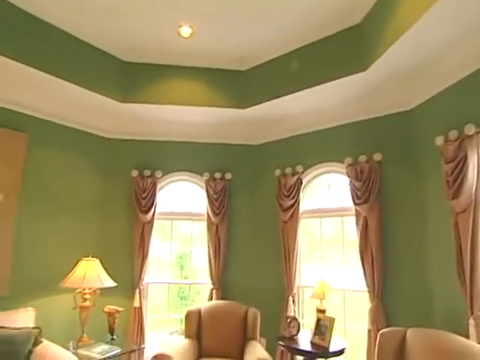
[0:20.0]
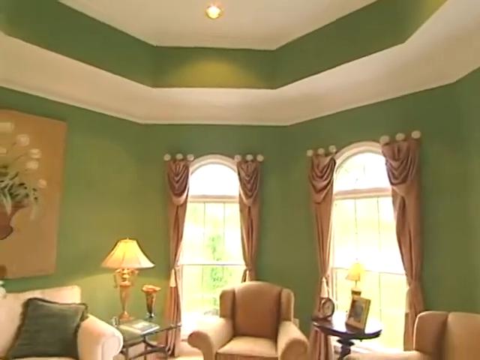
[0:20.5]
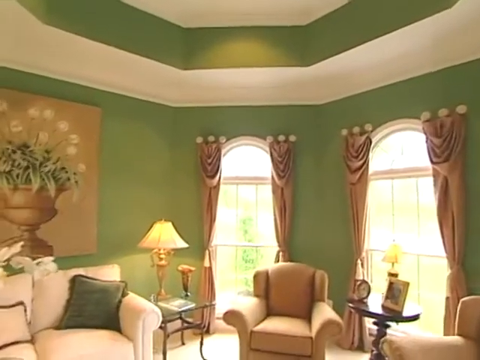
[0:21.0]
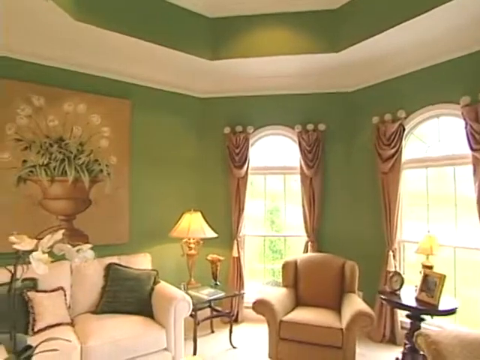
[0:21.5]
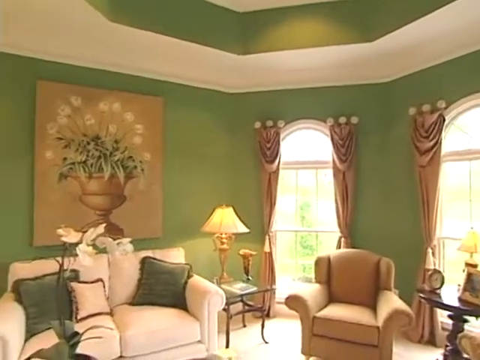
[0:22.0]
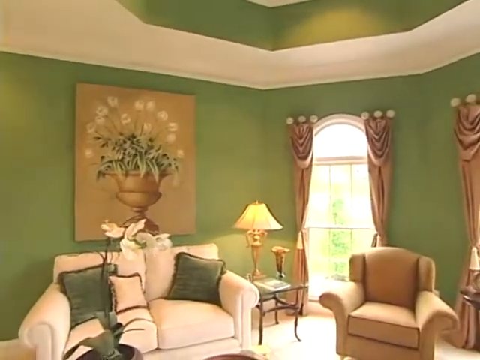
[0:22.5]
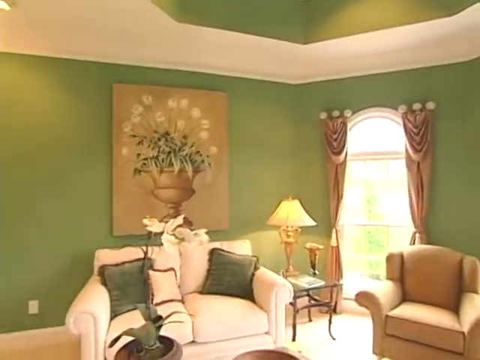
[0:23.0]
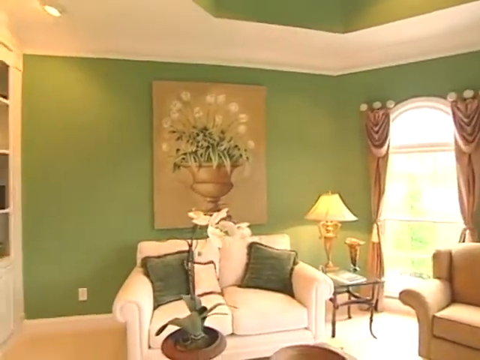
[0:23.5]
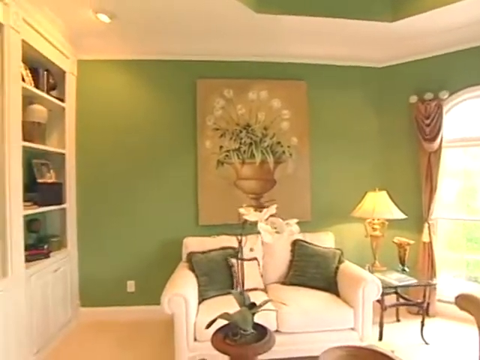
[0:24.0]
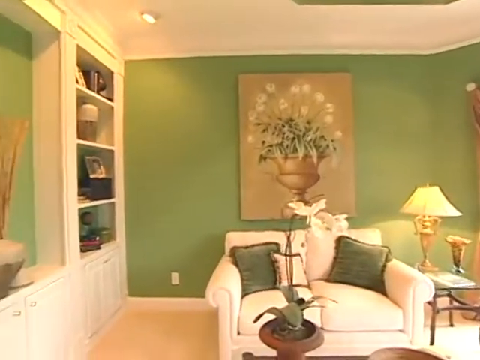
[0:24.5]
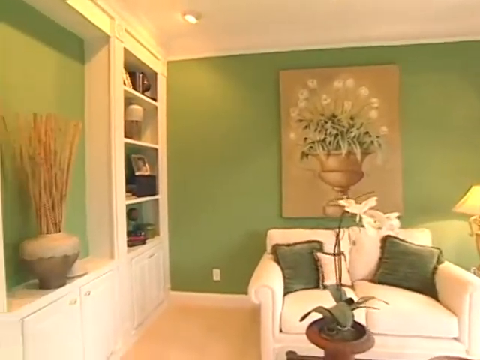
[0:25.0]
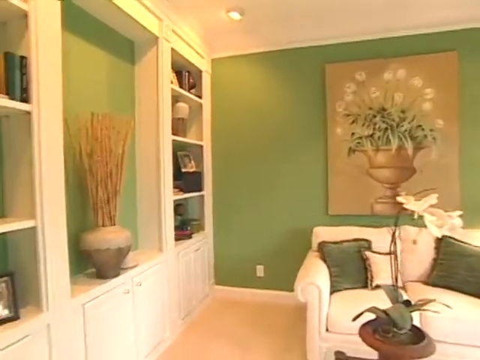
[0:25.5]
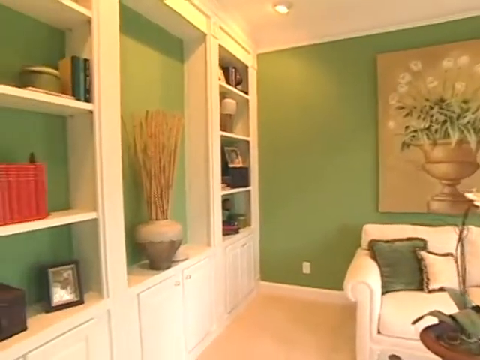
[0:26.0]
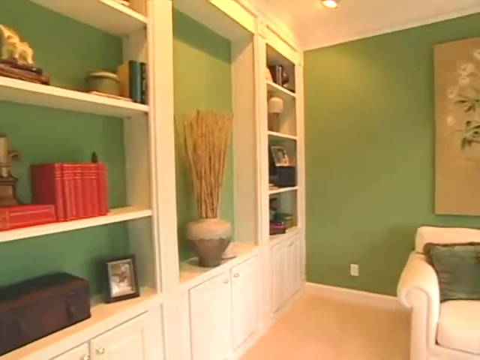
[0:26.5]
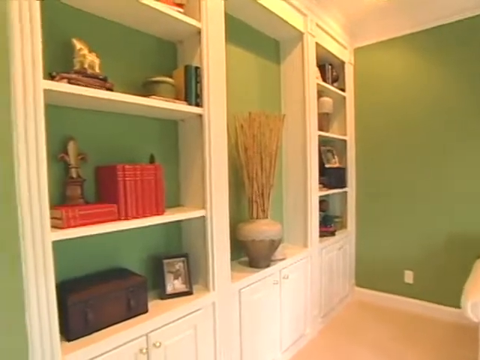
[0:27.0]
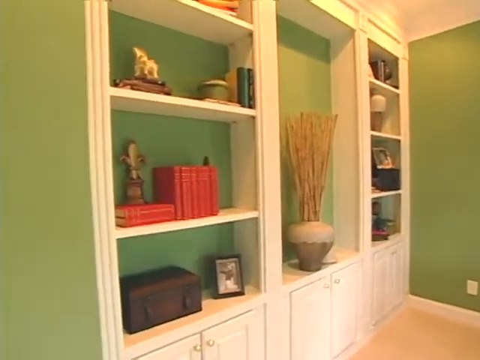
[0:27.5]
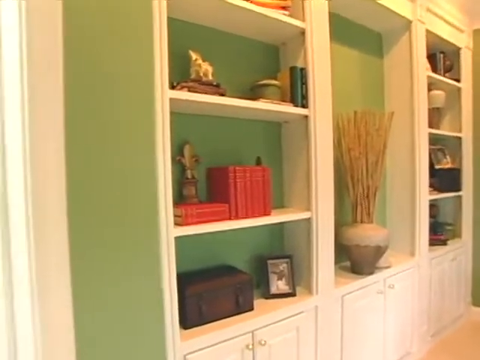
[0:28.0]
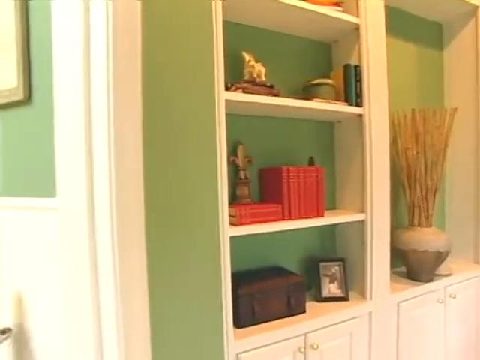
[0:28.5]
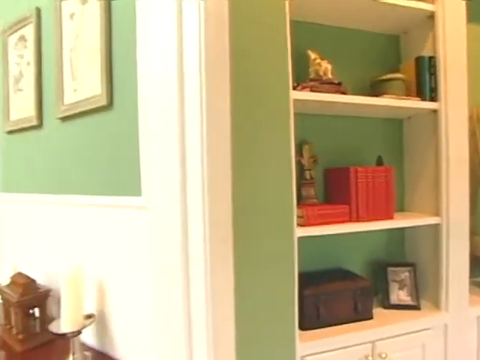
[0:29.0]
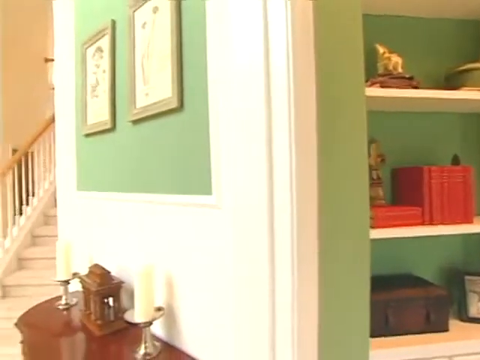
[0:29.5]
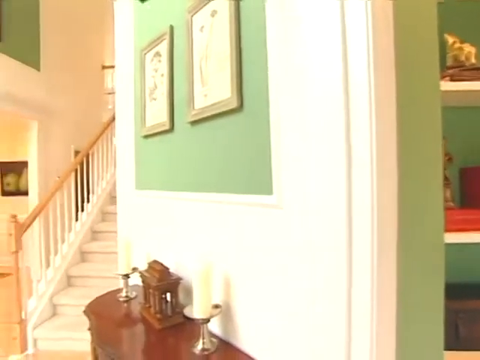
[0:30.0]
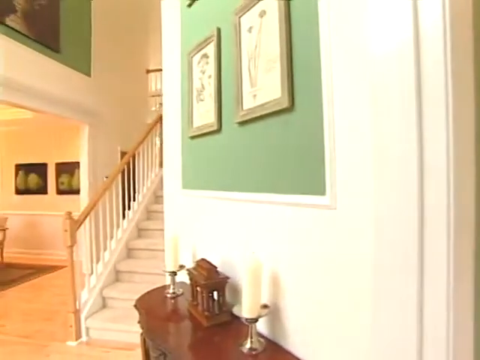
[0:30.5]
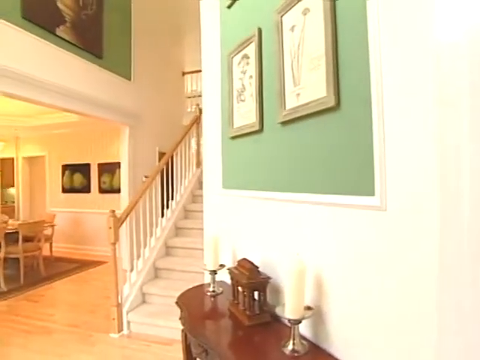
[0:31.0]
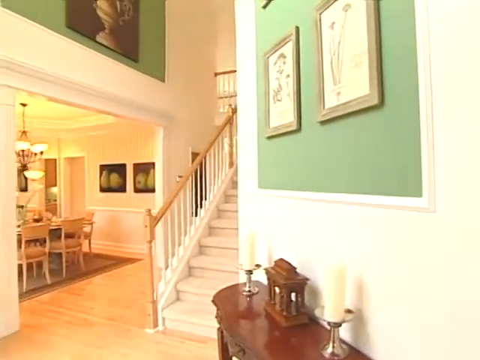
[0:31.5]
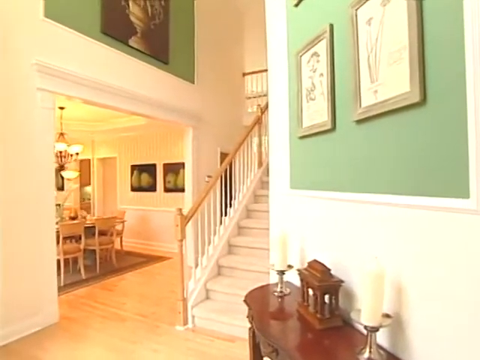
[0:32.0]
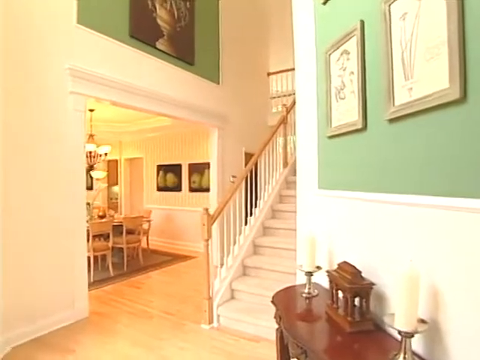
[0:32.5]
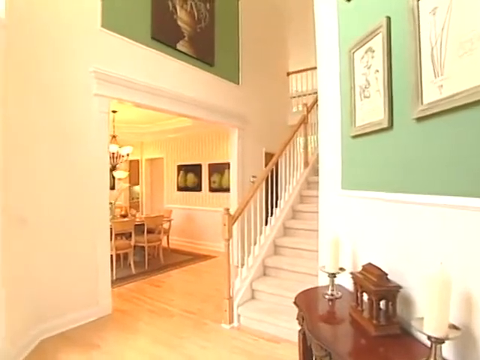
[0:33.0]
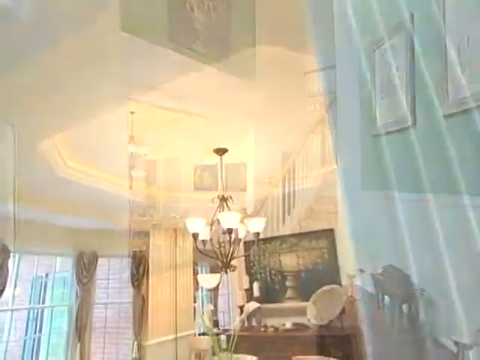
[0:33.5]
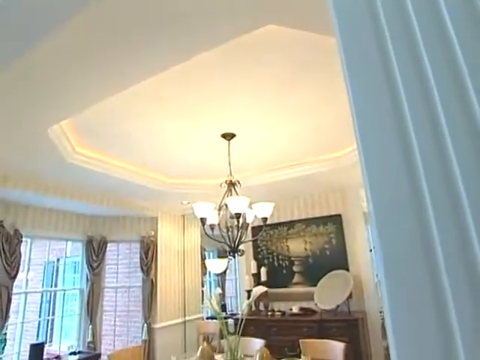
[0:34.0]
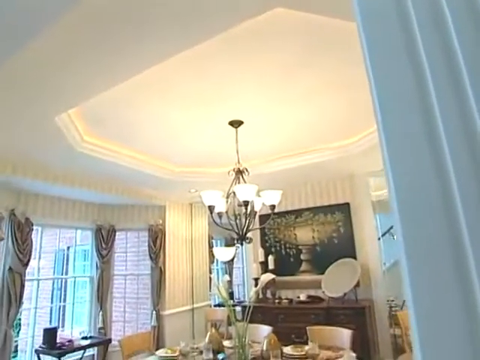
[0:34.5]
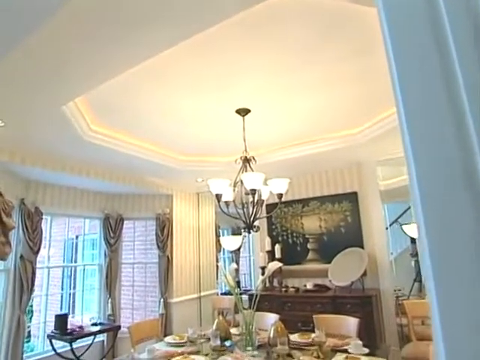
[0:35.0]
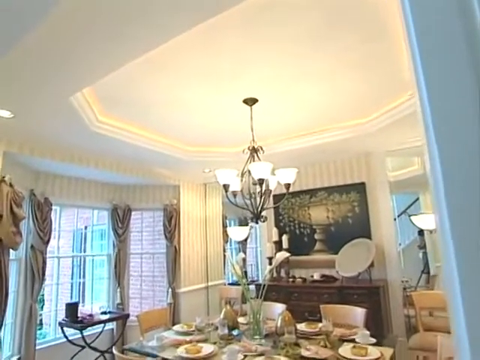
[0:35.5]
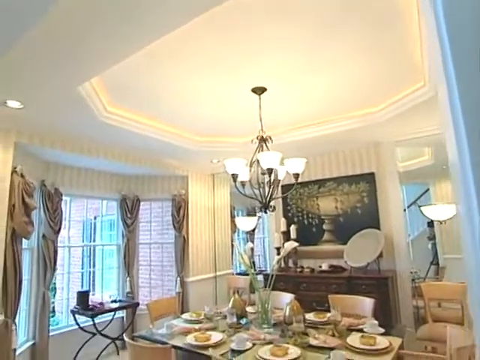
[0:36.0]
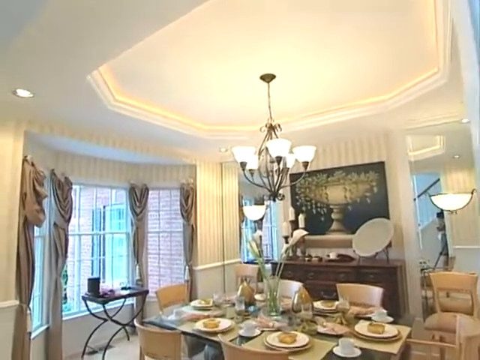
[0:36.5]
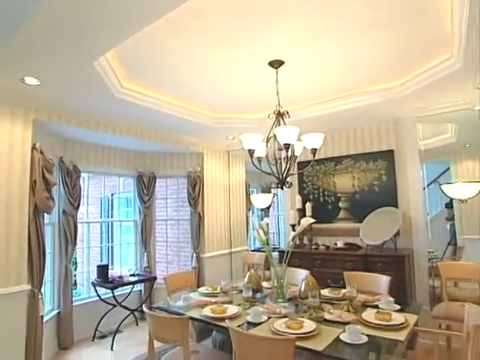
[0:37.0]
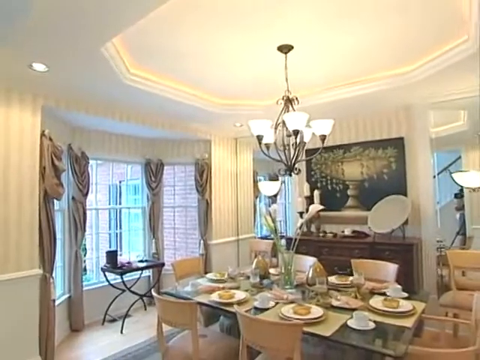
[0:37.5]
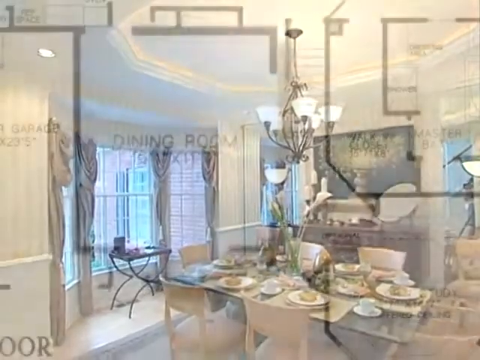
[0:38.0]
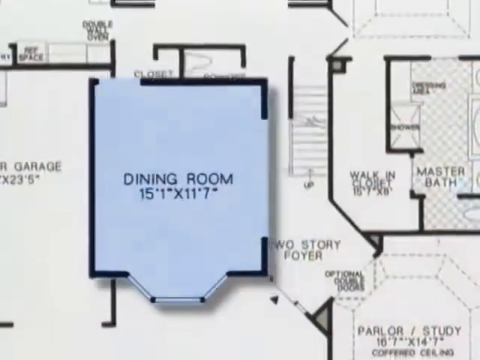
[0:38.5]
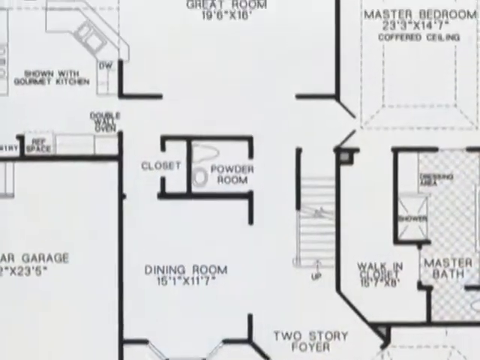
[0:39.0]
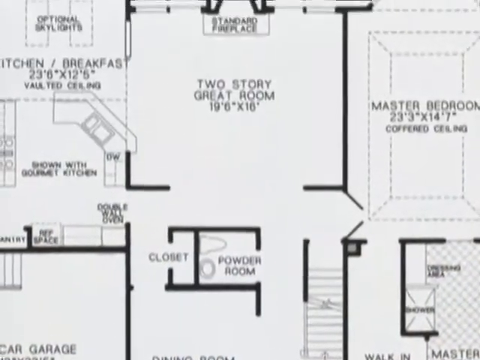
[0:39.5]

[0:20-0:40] The camera continues towards the left-hand side of the room inside the building, showing the green walls and the arched windows with rose gold looking curtains on either side of each window. Each of the curtains has three white balls above it. Above the windows is some white ceiling, which indents again into another level of white ceiling with a green strip between the two. Two lamps and a small part of a chair are in frame. The camera shifts further left to show some white orchid flowers and a cream settee with some green cushions, with a canvas painting of a plant in some kind of goblet above it. Shifting left again, the camera shows integrated shelves and cupboards holding various objects such as red books, a plant pot with some sticks in it, and picture frames, along with a brown briefcase and some ornamental objects. The camera continues left and moves out of the door into some kind of hallway, showing the entrance to the stairs, some framed pictures on the wall, and a small side table with some candles and another object on it. The entrance of a dining area is visible, with wooden chairs and wooden flooring, a small chandelier style light fitting above the chairs, and two pictures of pears to the right of them. The camera then shifts to another room with another light fitting and some large windows with several pairs of curtains, before the video switches to a zoomed-in plan of the house with the dining room highlighted. The plan pans upwards to show the two-storey great room highlighted in blue.